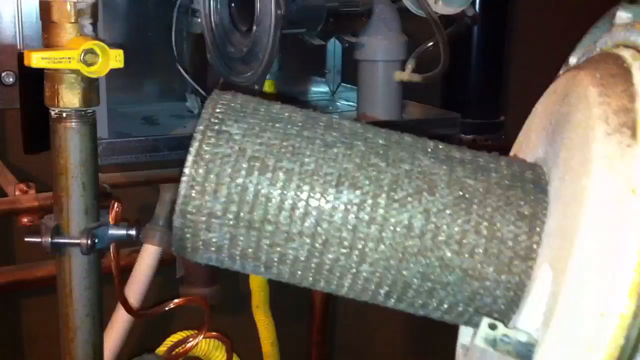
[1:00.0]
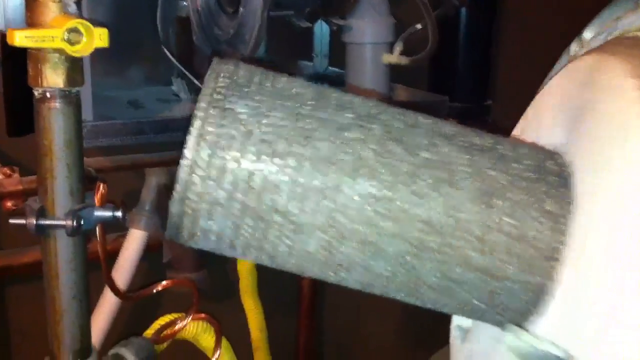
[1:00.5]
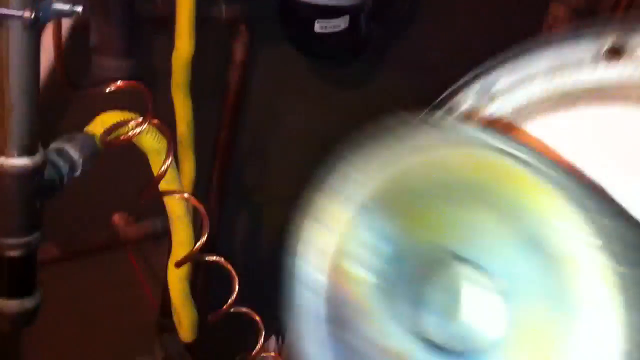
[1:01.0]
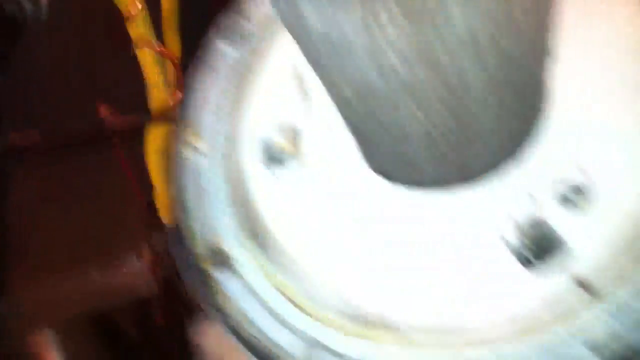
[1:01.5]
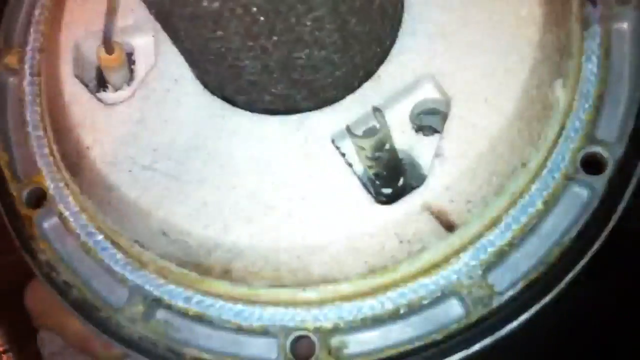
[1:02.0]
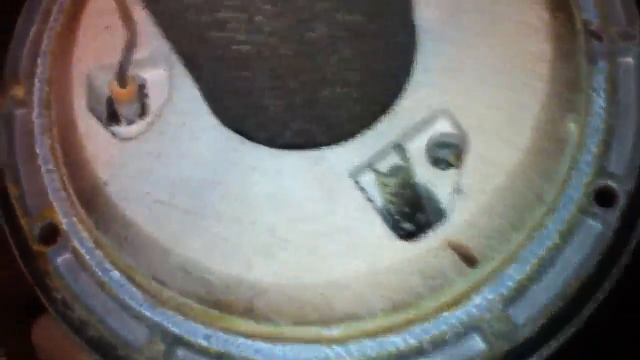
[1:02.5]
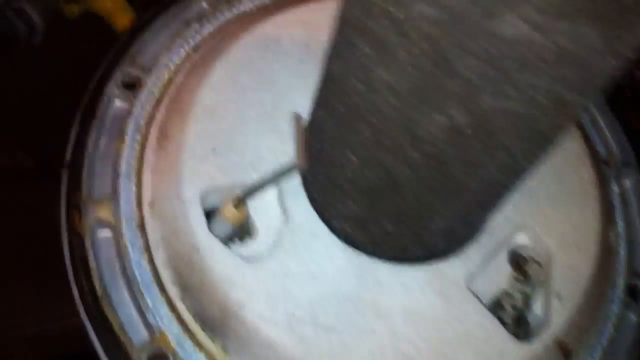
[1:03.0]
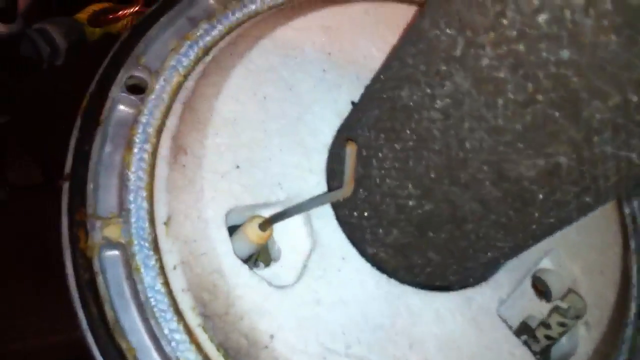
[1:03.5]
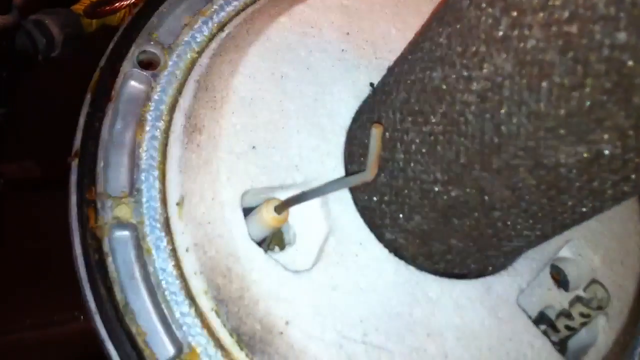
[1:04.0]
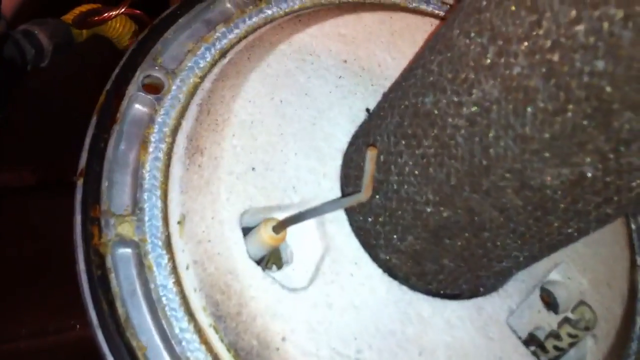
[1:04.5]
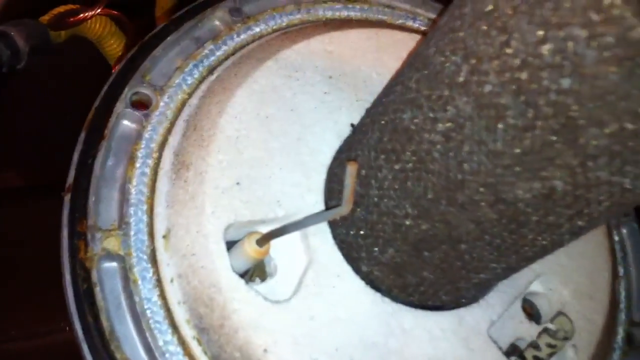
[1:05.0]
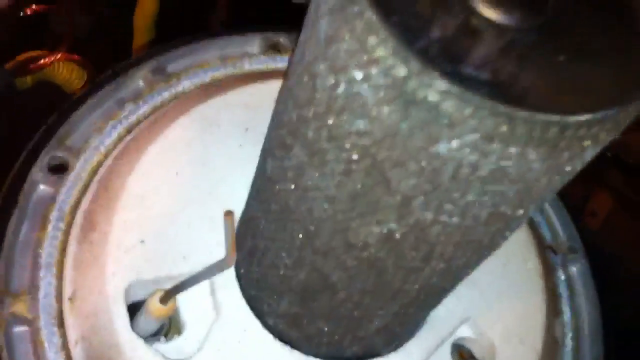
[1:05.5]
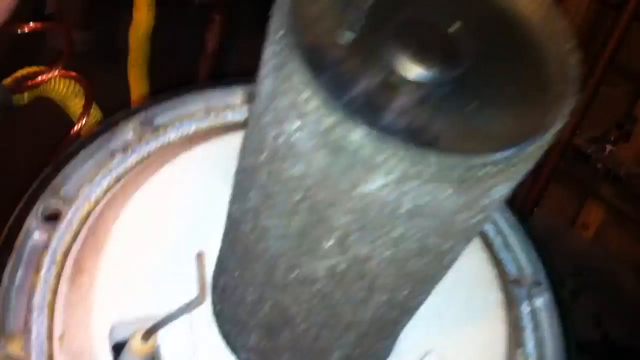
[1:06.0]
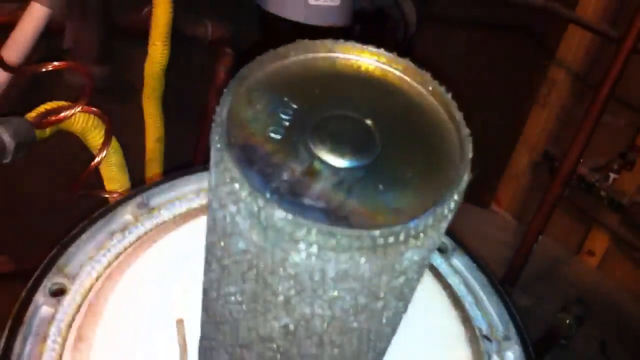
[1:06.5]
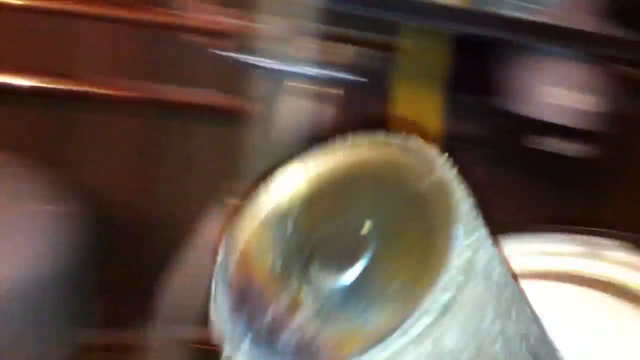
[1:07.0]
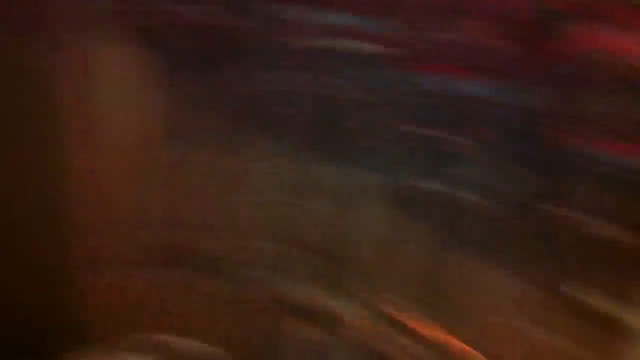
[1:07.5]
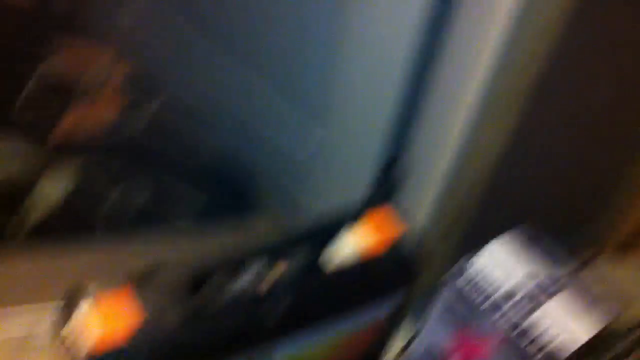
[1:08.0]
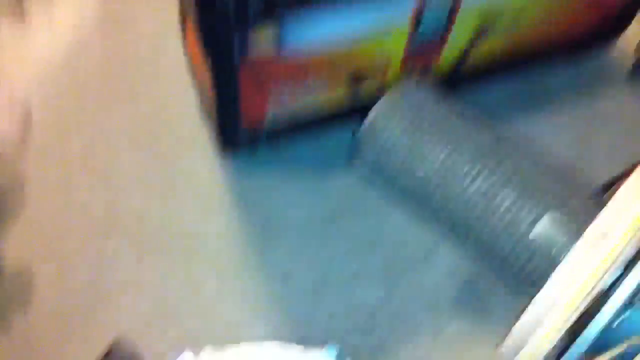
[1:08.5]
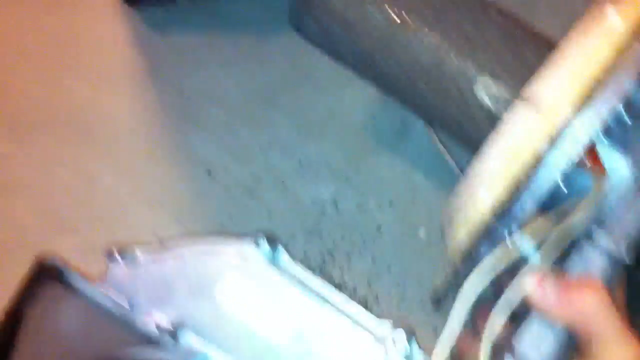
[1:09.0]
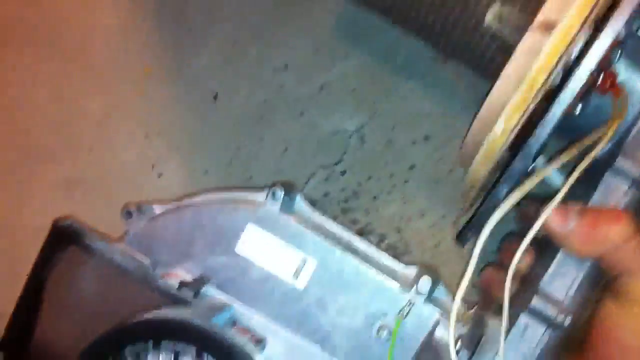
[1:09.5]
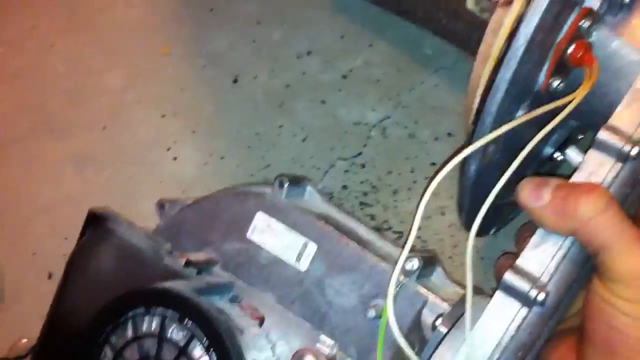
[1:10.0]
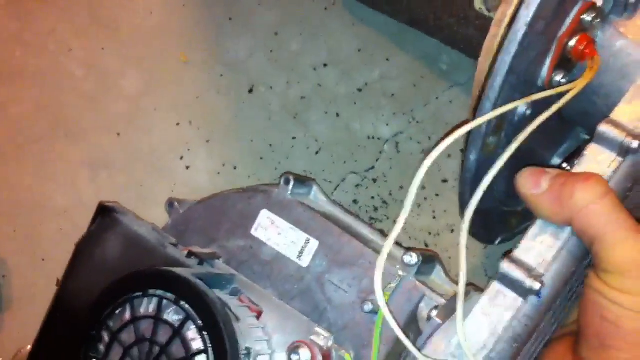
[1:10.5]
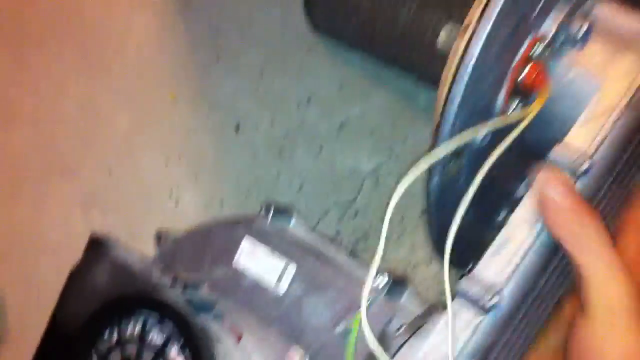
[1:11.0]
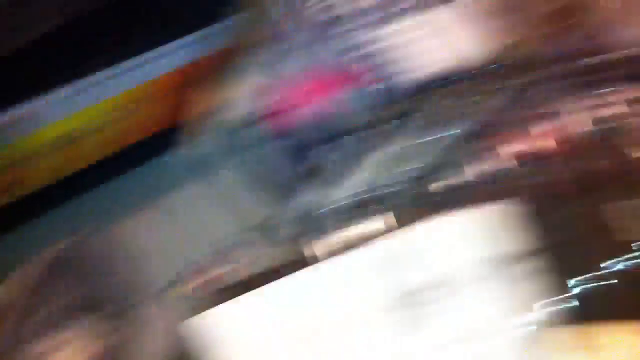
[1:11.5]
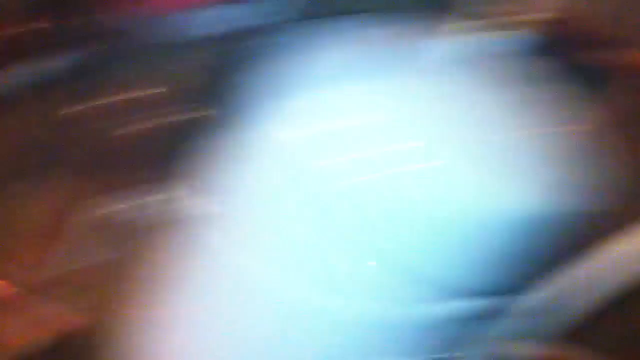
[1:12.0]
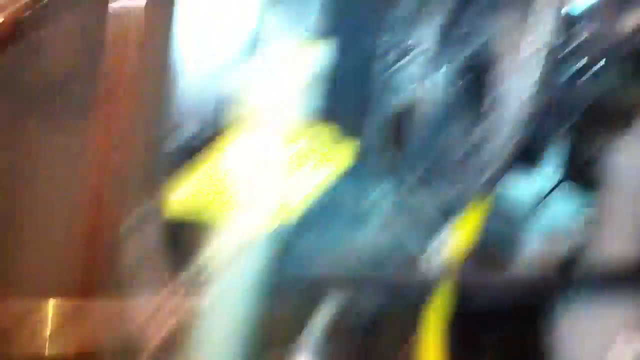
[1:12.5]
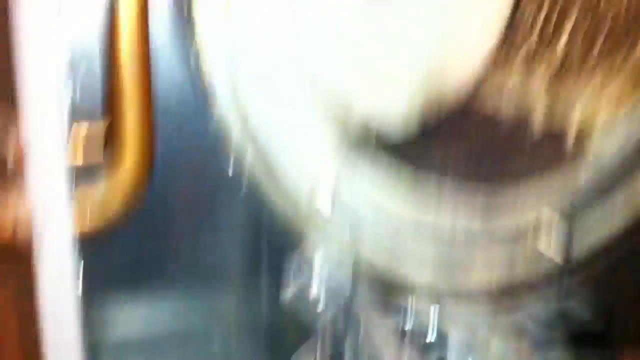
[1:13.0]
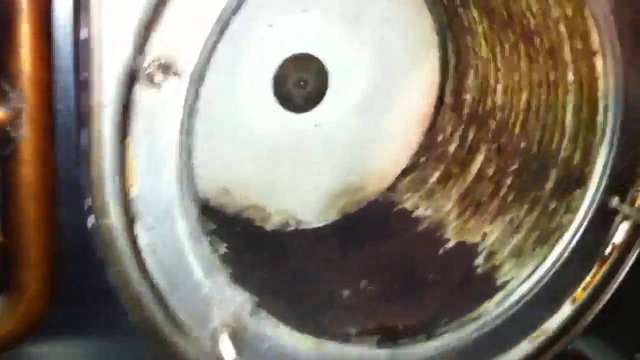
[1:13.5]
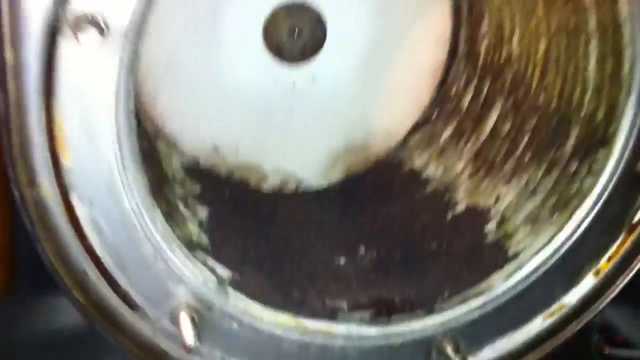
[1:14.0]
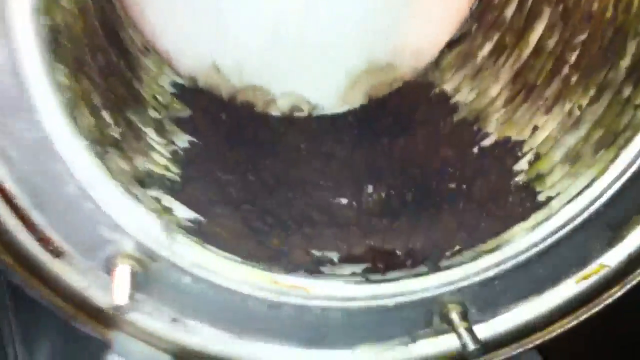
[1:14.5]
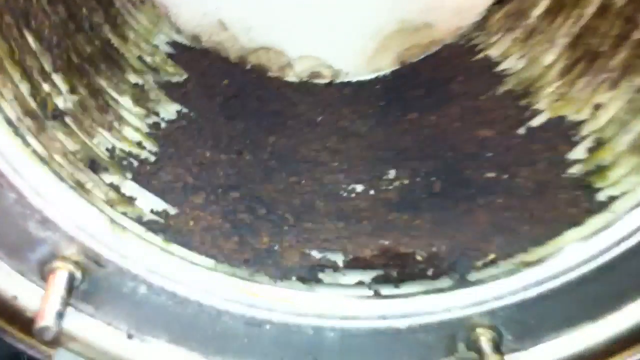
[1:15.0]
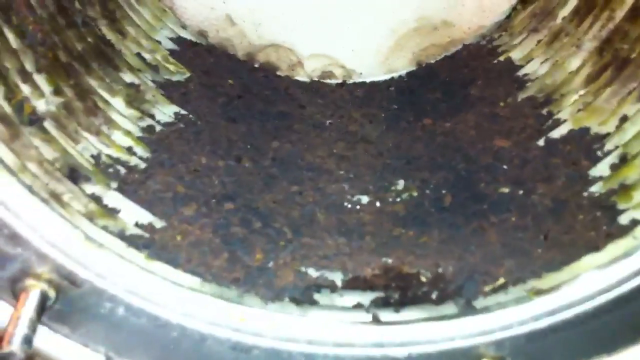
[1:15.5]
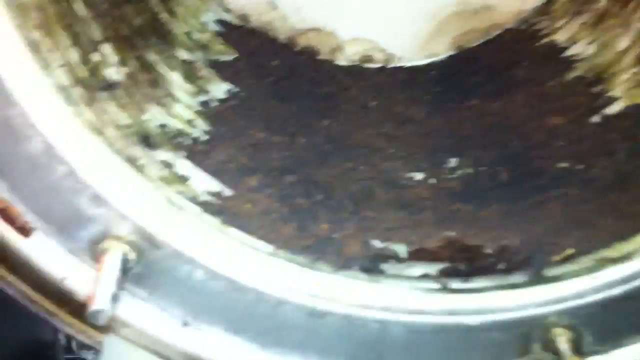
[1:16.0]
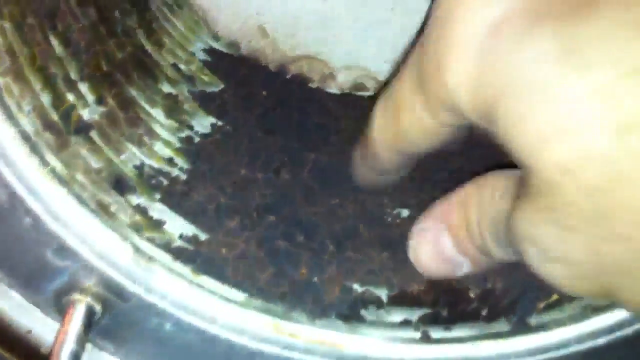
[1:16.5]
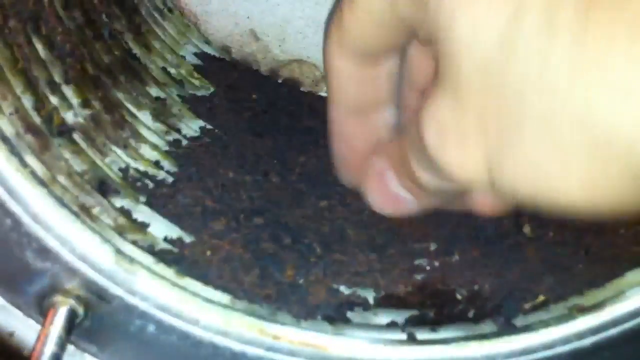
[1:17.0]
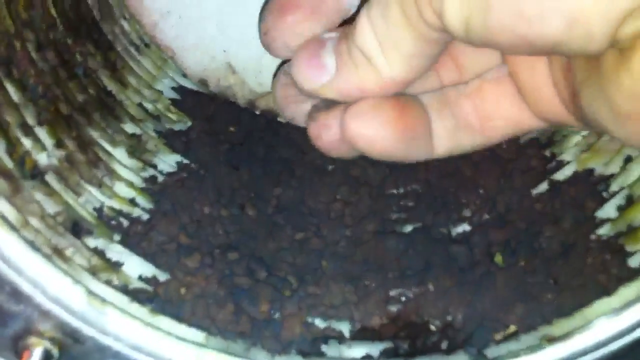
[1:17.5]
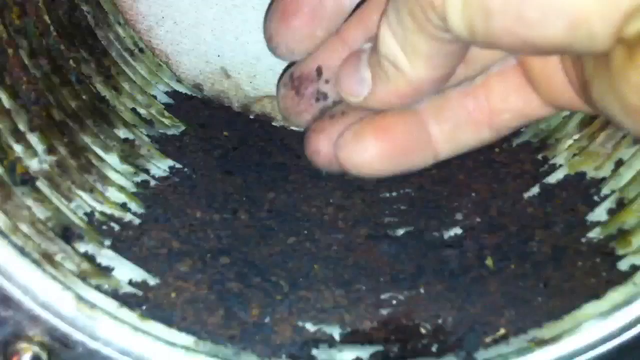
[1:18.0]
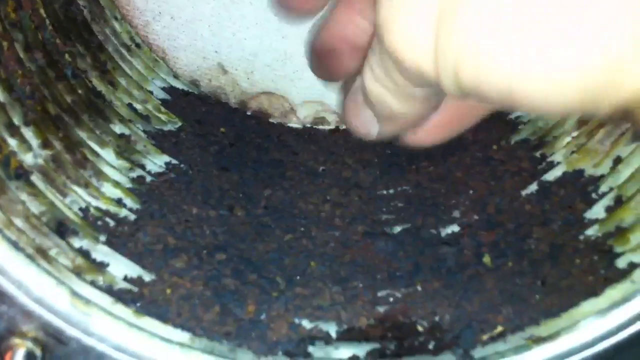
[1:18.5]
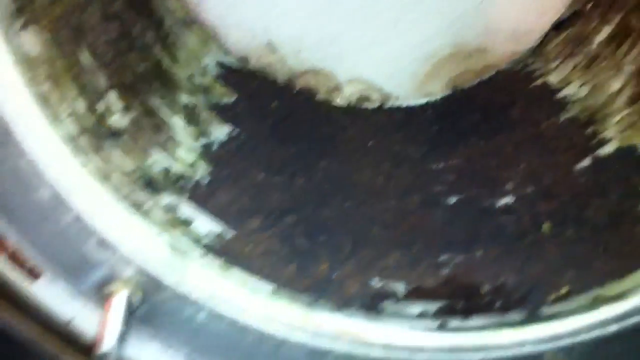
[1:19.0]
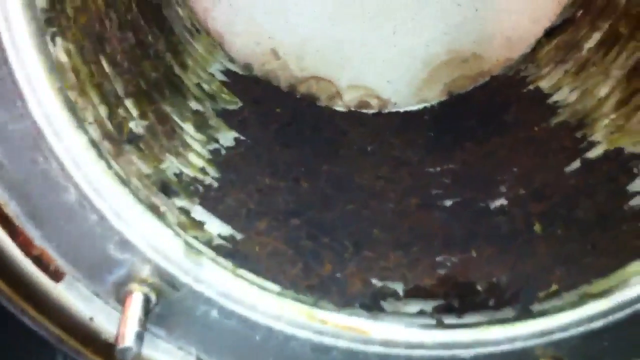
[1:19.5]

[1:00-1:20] The light is still shining on the machine part, apparently a silver coil part just pulled off another part, which looks a little rusty. The man's hand is visible as he places it back down on the table. The camera goes back to the machine and looks inside, where it is really dirty, with what looks like a lot of rust, possibly mold. The person grabs some of it with their hand and it kind of breaks off. It looks very grimy.